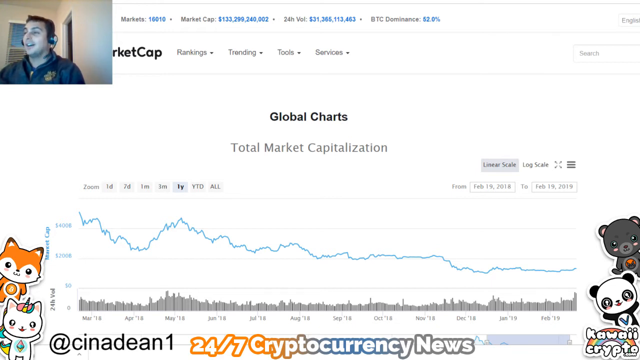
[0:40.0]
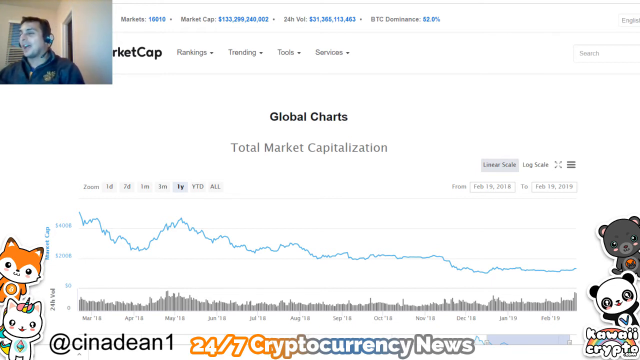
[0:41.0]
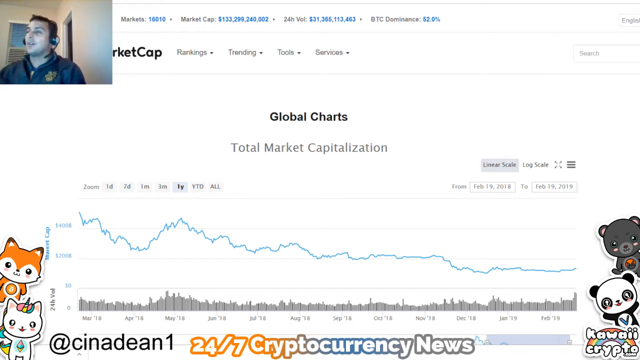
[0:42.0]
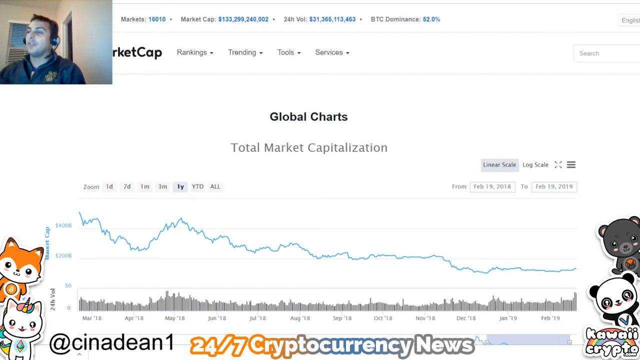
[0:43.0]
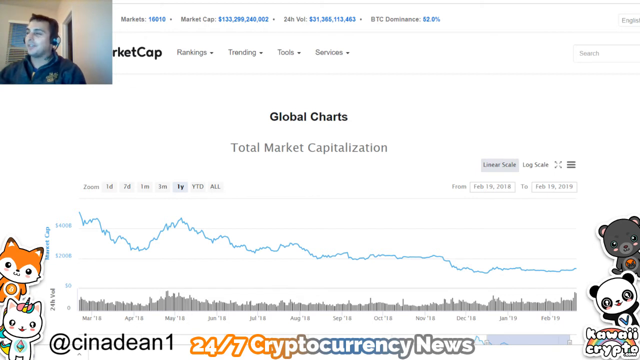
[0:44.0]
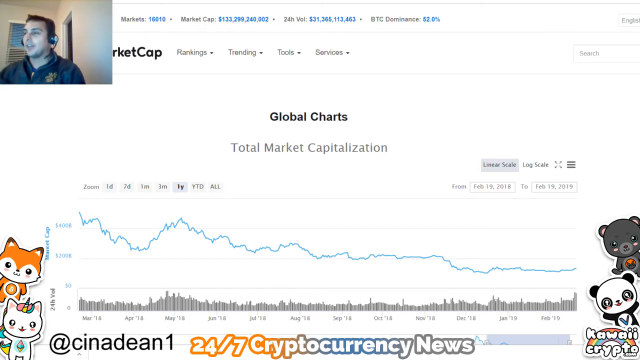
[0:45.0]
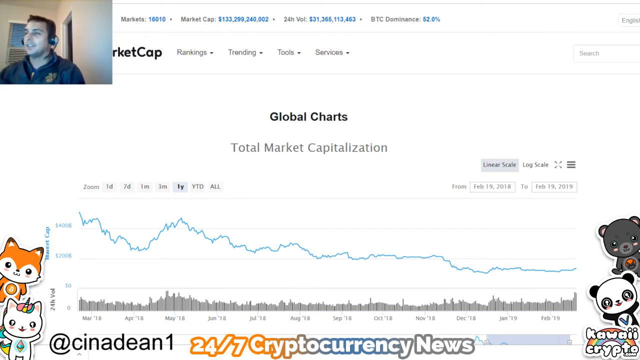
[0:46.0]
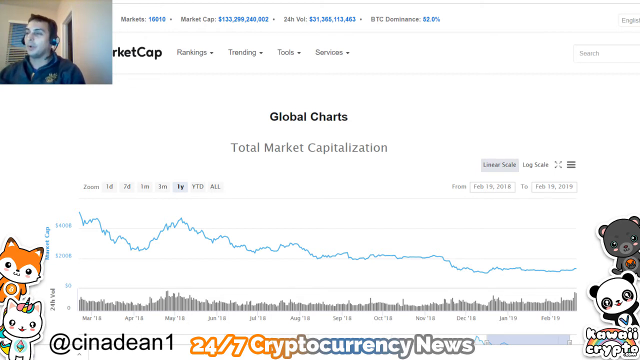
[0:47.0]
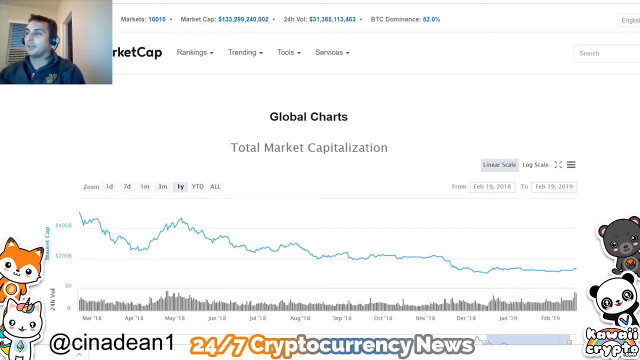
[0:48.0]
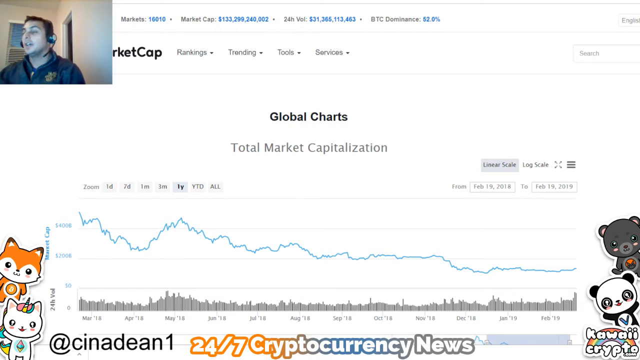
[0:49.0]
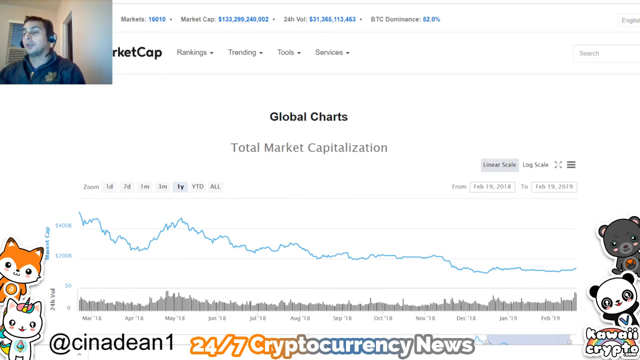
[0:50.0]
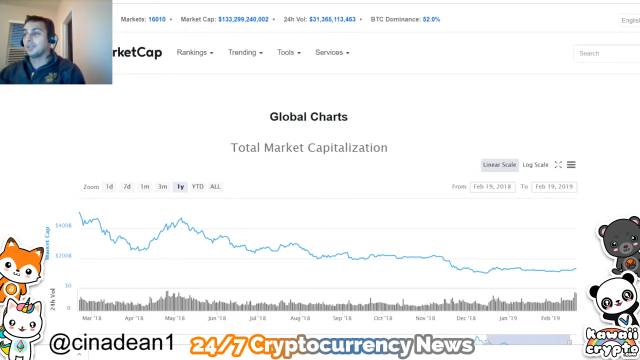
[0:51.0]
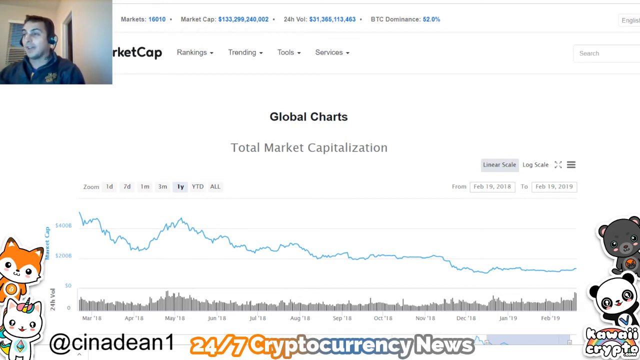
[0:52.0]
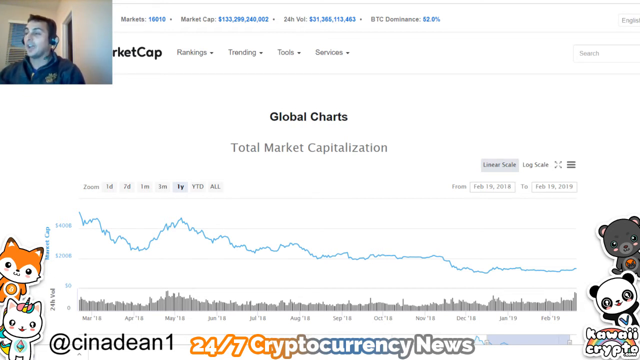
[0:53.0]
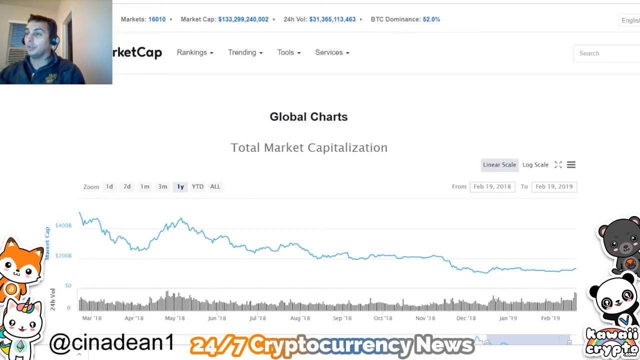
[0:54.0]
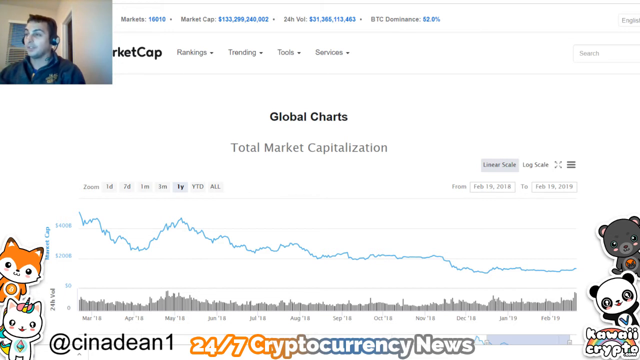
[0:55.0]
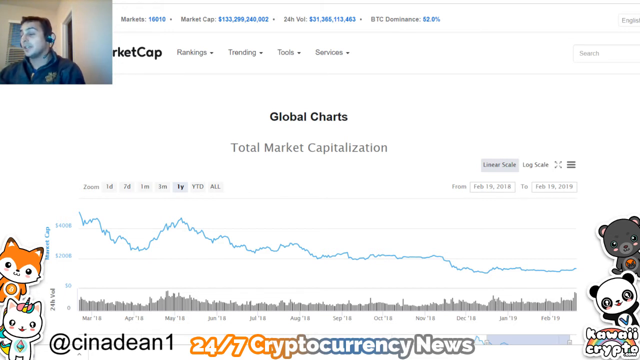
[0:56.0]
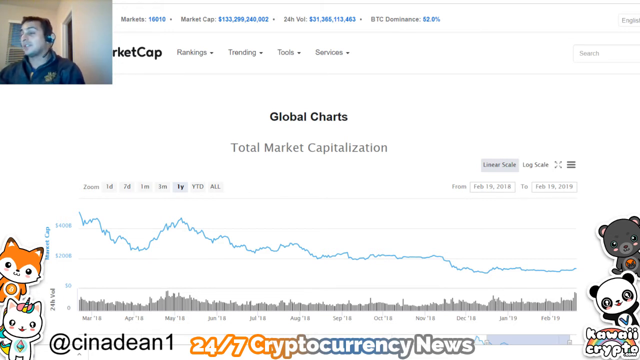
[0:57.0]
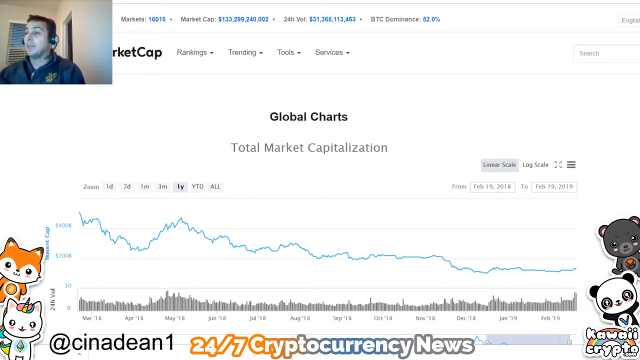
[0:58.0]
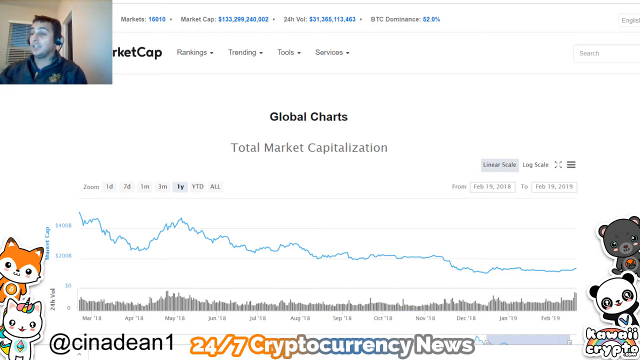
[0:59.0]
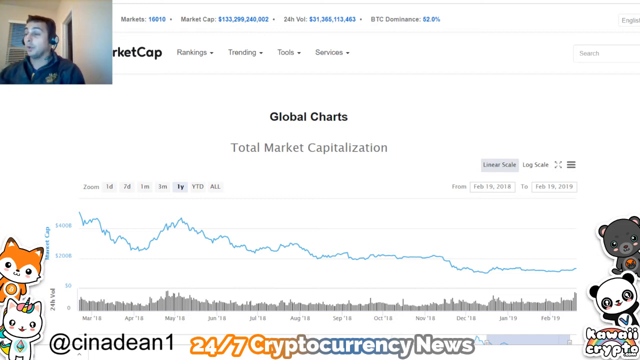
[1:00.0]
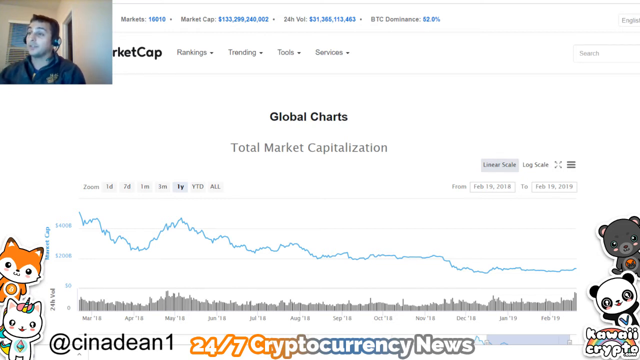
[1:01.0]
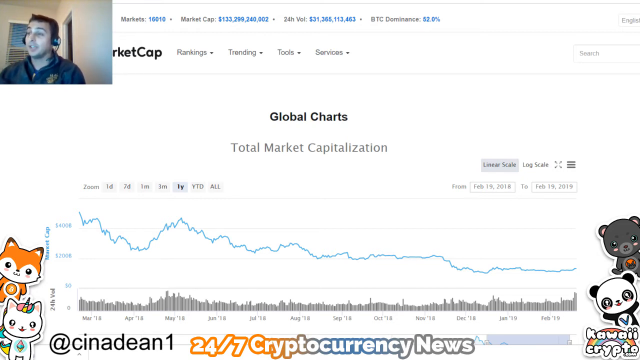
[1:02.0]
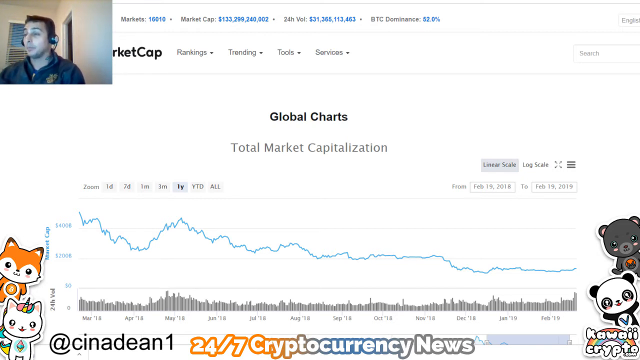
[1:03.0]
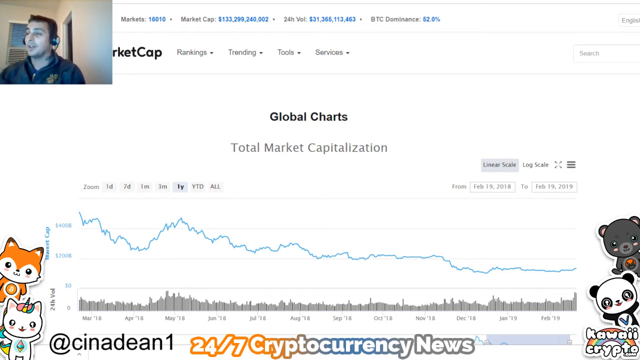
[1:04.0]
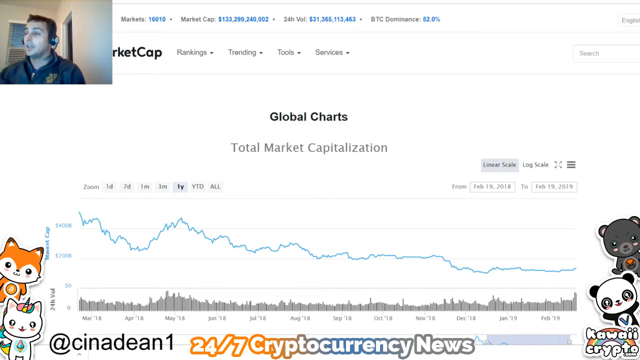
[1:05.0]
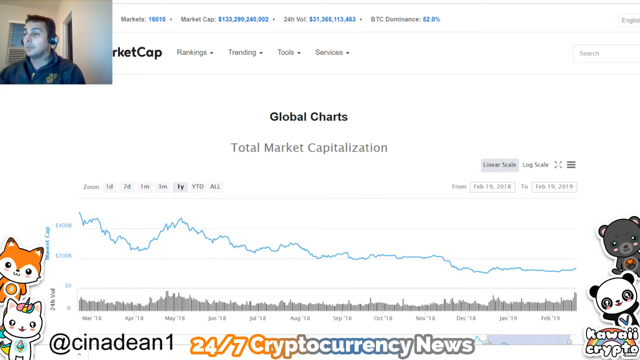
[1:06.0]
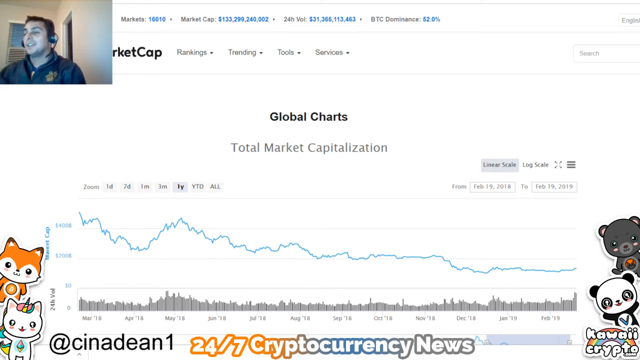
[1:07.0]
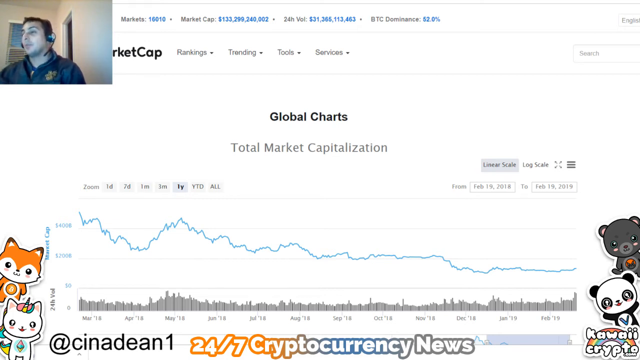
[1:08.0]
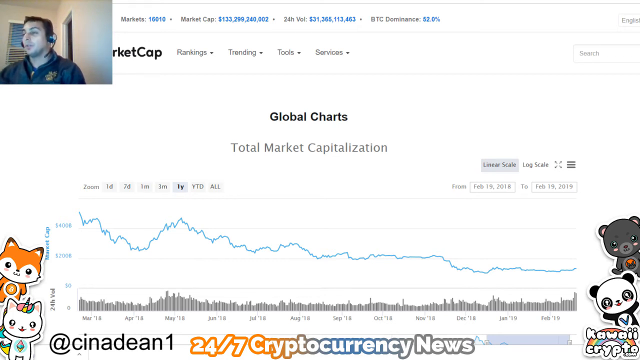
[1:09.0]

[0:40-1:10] More of the graph is shown. A fox is on the left and a panda on the right, with a little kawaii grey bear, possibly a koala, above the panda; the animals overlay the market graphs as decoration. At the bottom is the text "Cinedine1, 24x7 cryptocurrency news". The host talks, apparently about the graph. In each one-year period the graph starts high and drops lower and lower. The market cap is apparently 133 billion, across over 10,000 markets.